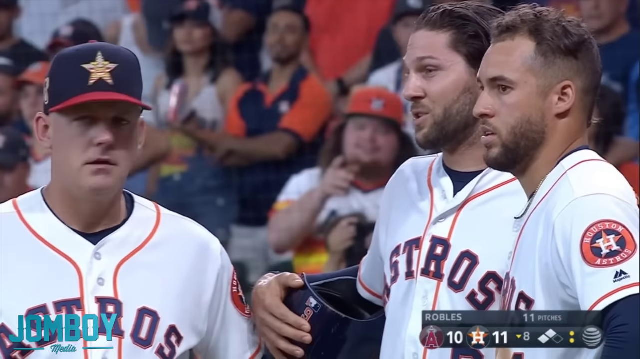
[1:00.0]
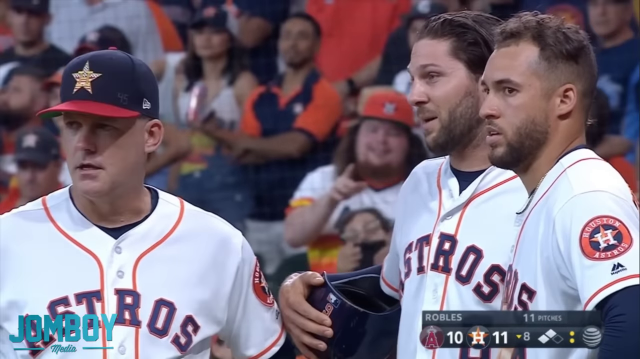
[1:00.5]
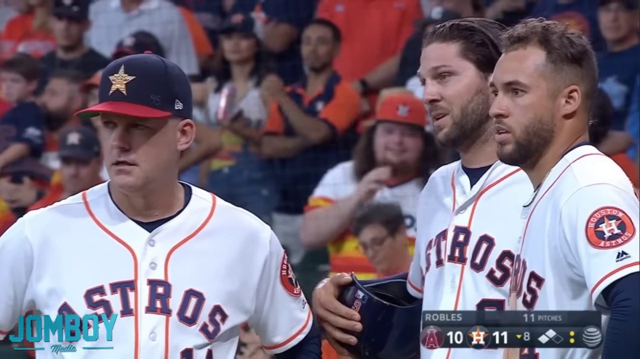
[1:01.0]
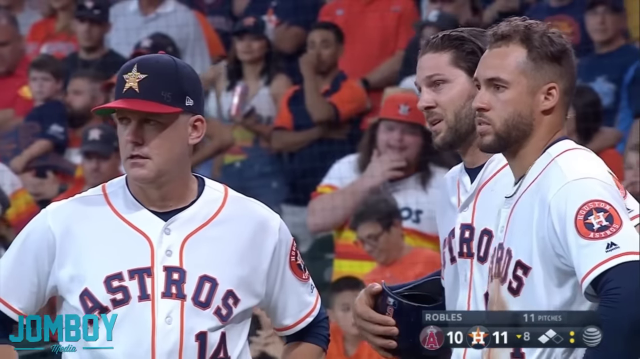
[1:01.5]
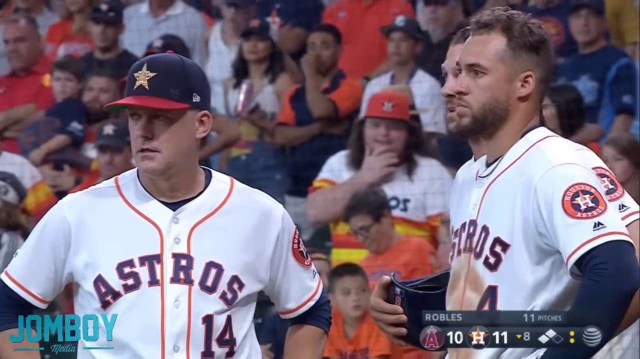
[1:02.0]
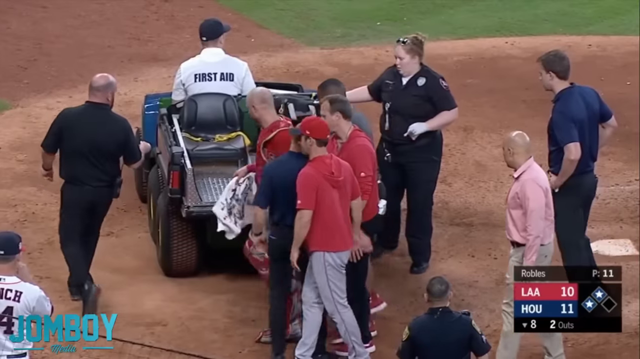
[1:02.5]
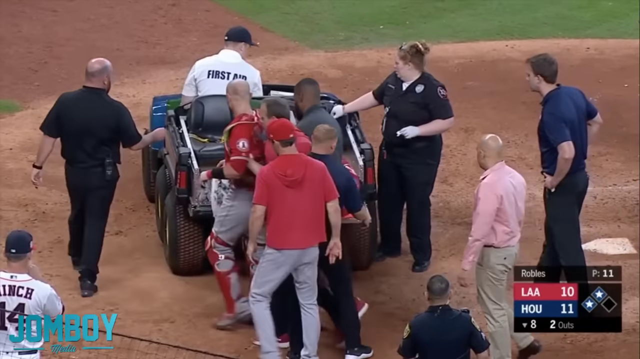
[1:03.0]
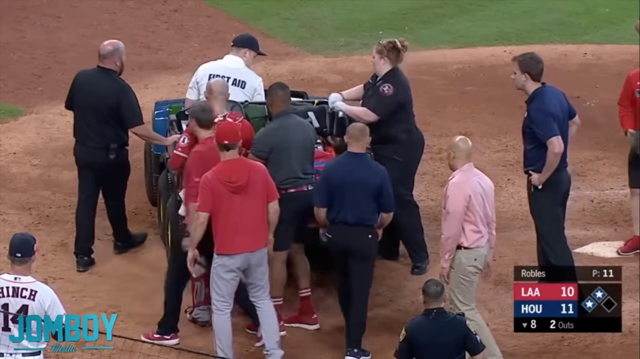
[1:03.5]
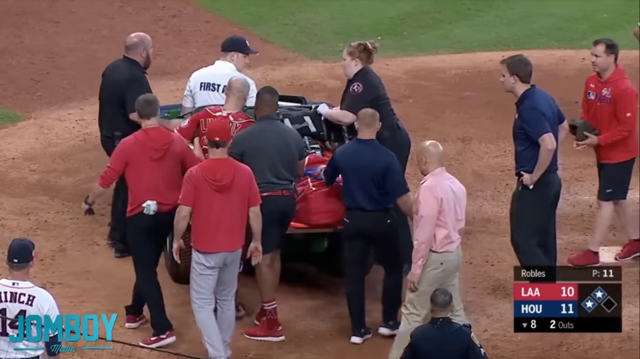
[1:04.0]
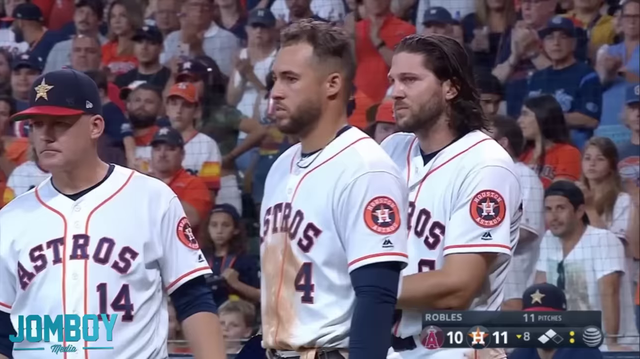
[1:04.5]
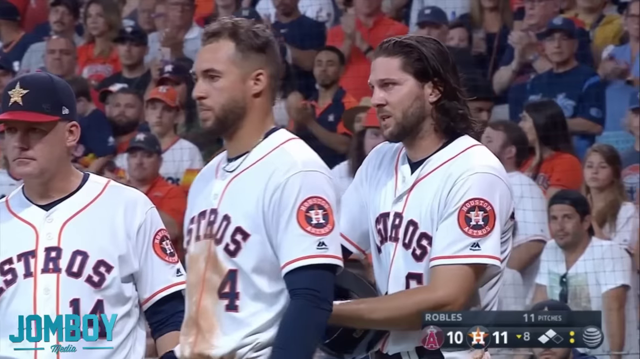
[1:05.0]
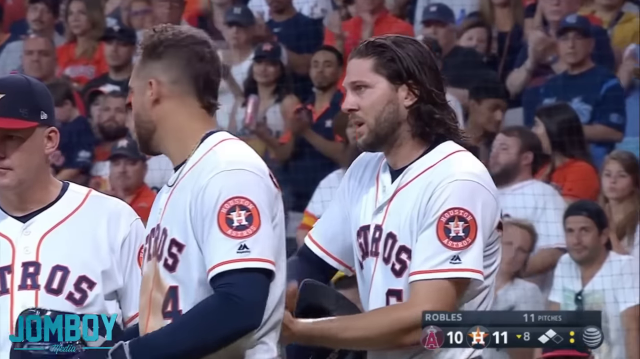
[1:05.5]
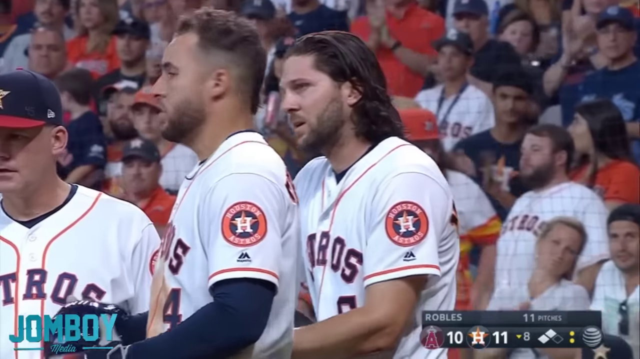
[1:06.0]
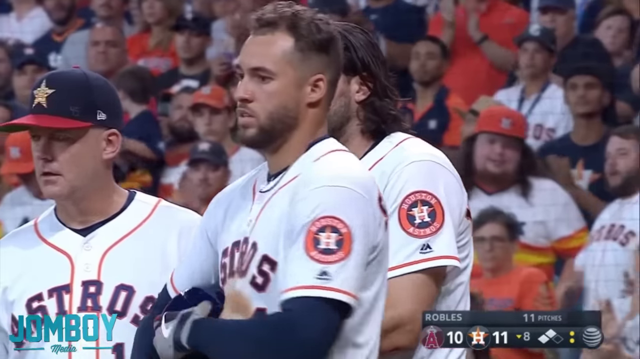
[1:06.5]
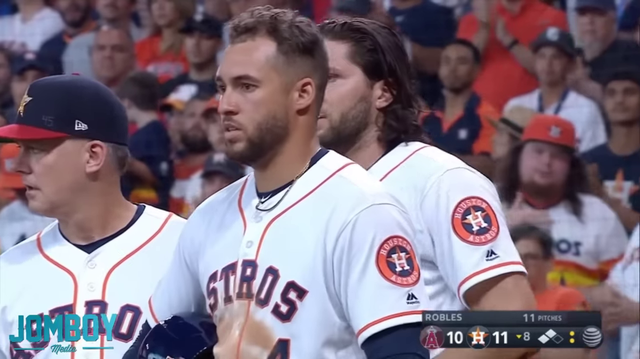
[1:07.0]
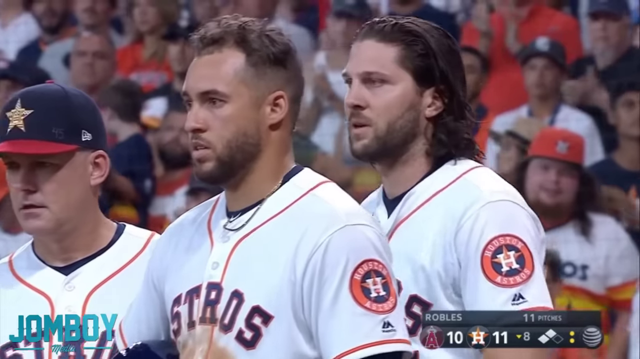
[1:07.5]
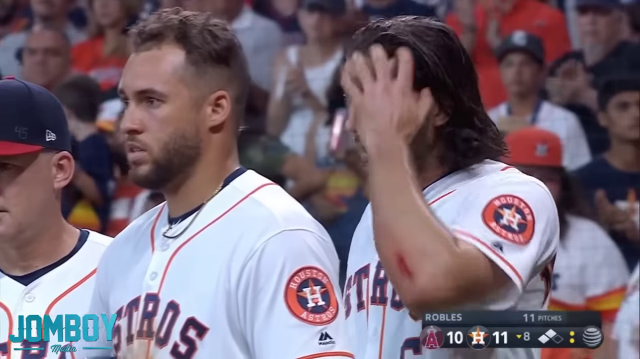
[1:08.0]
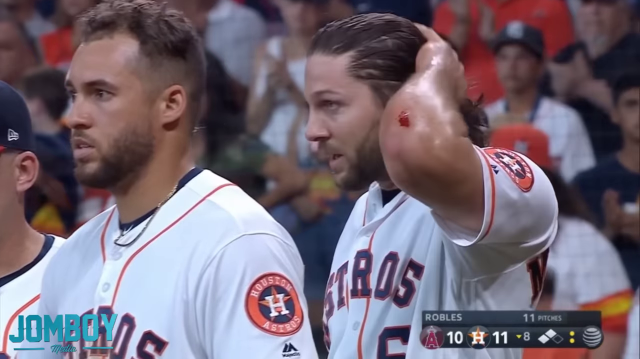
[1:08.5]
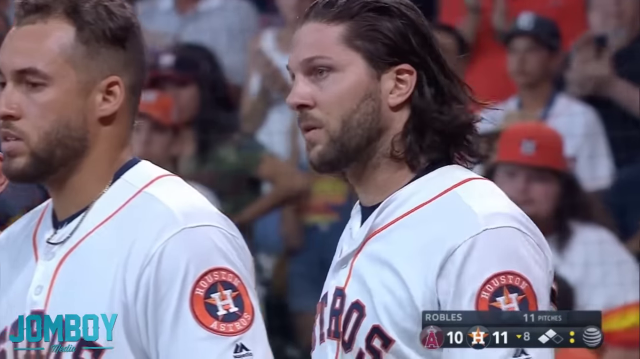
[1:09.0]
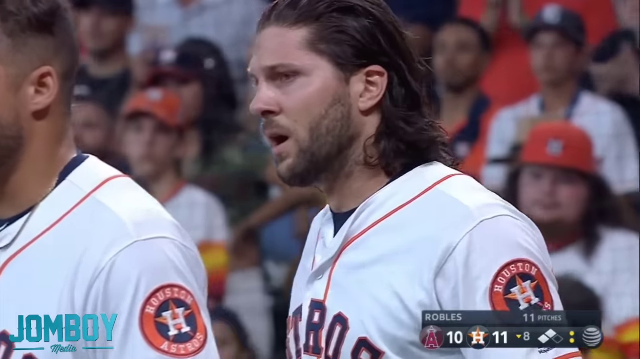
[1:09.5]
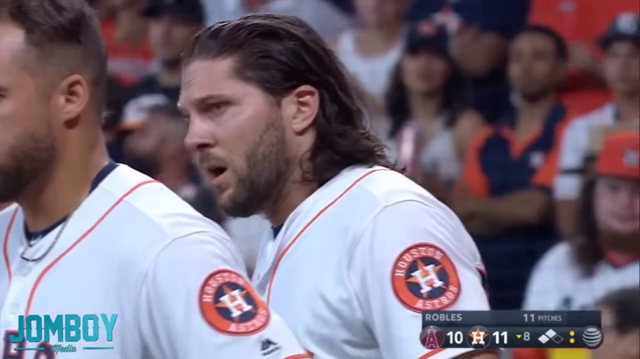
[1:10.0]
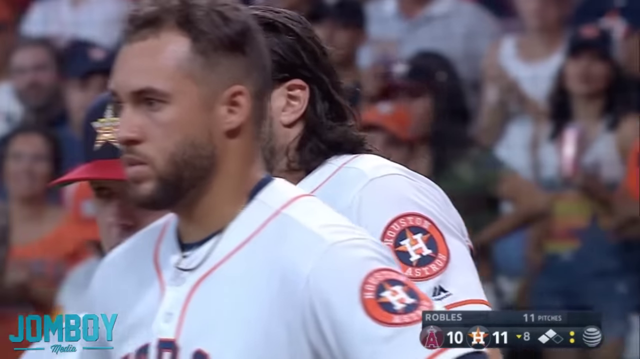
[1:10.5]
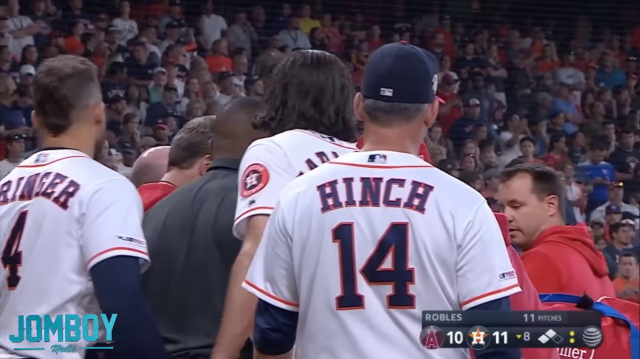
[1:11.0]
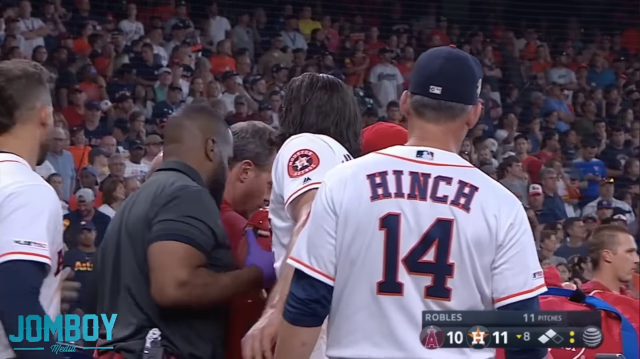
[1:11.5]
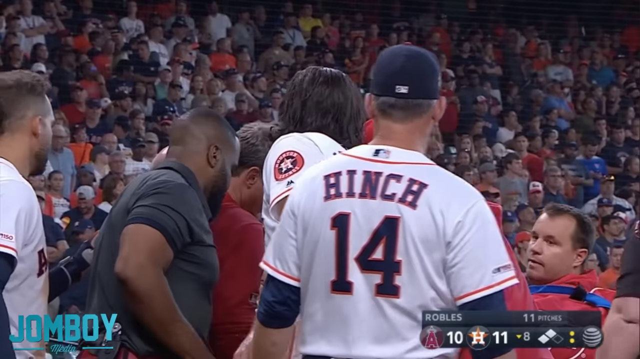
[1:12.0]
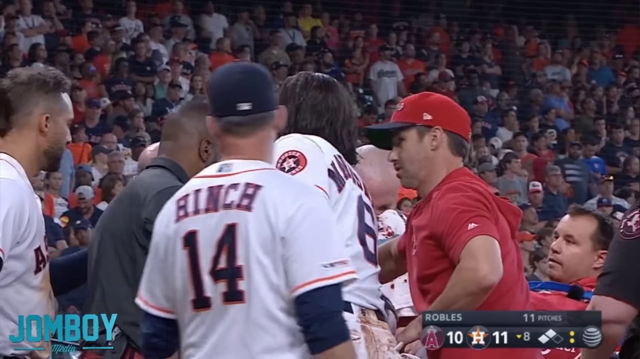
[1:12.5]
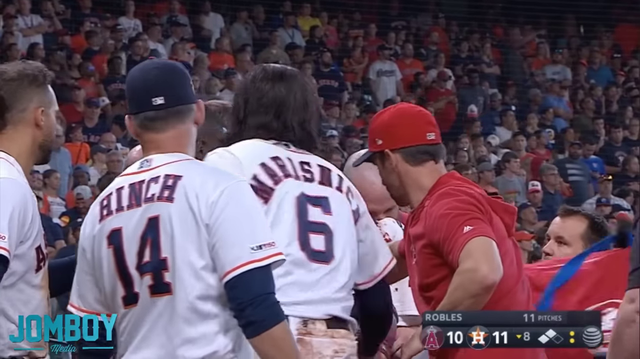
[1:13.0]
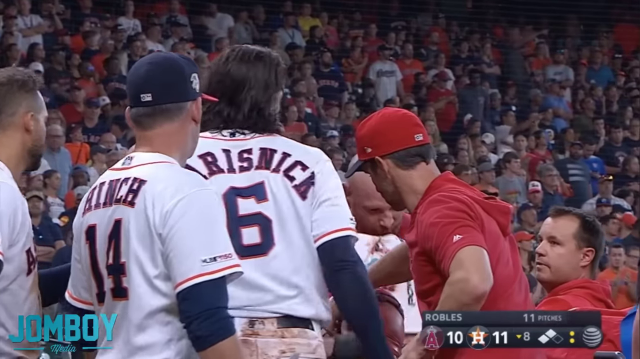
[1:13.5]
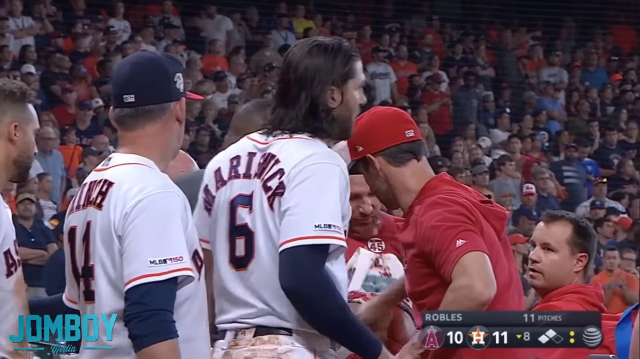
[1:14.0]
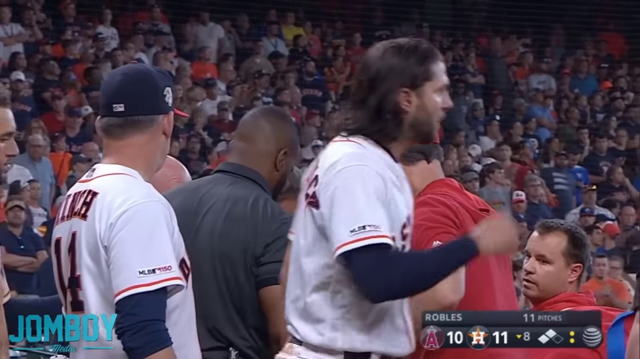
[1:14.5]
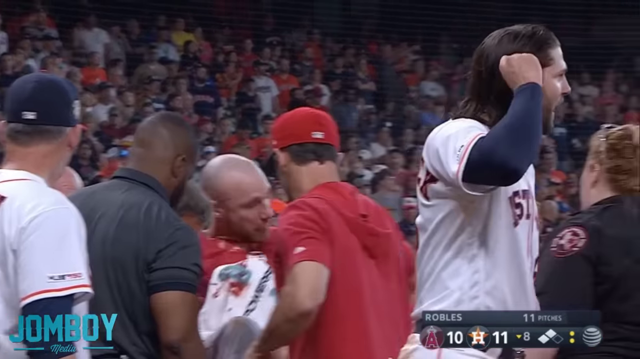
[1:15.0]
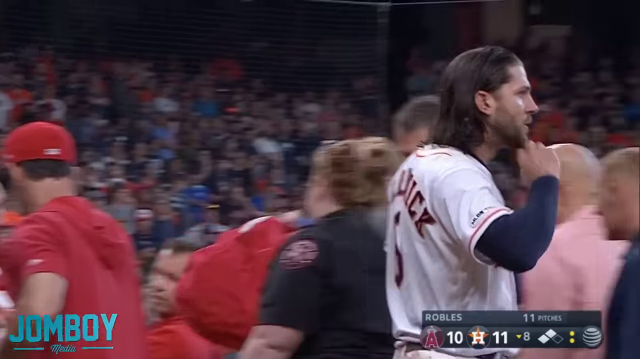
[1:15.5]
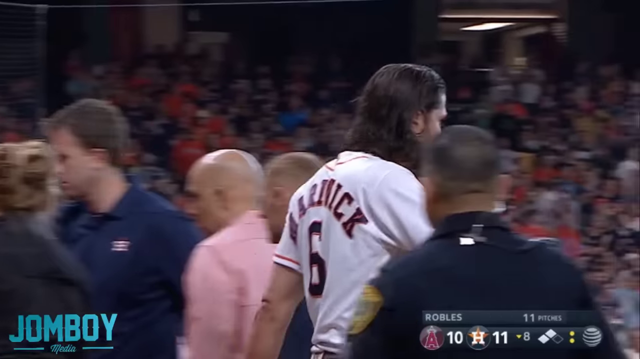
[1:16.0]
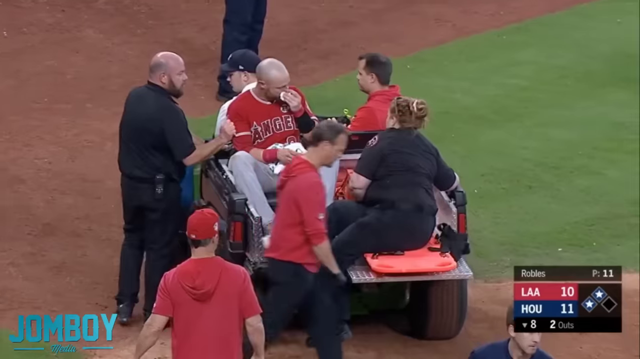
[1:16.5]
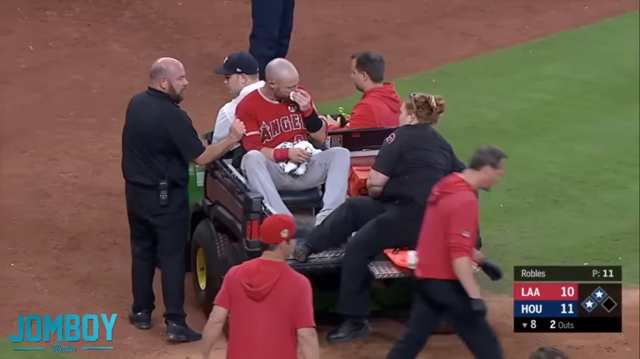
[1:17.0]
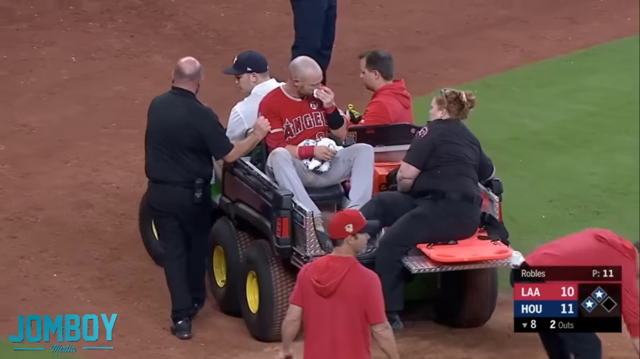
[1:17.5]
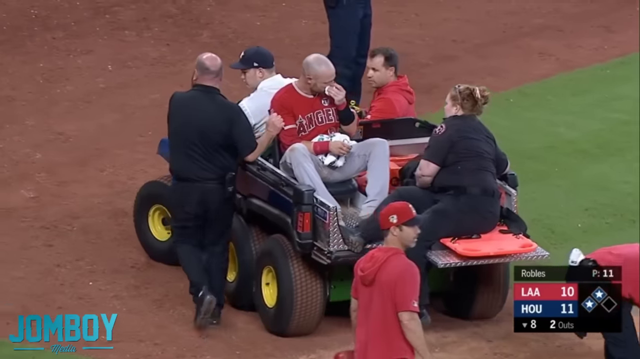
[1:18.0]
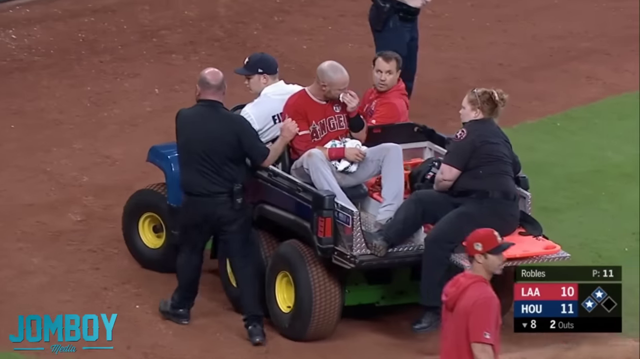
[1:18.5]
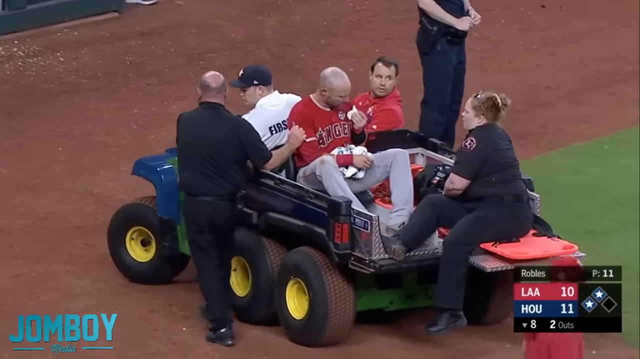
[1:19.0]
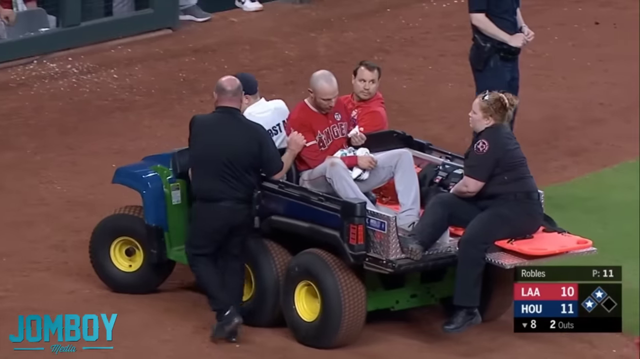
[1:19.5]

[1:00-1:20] People help the injured player into the back of the black vehicle the first aid drove onto the field; it resembles a pickup truck, opening at the back. In the audience, some people have their mouths open and look nervous and anxious. As the player is put in the cart, people start clapping. The player who ran into him lifts his hand to move his hair back, and his arm is bleeding. People are checking on the injured player, whose nose appears to be bleeding; it is unclear whether the blood is his own or the other player's.